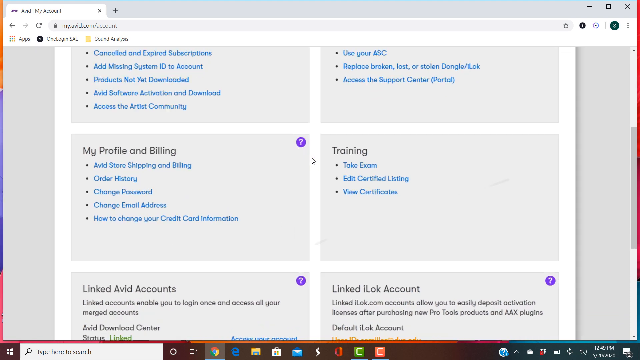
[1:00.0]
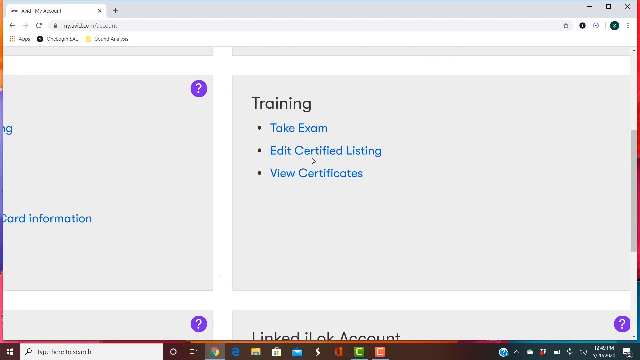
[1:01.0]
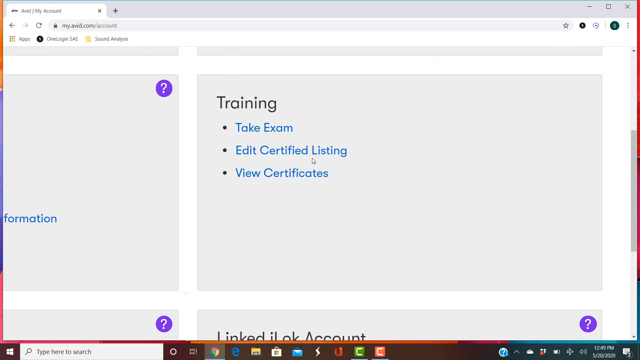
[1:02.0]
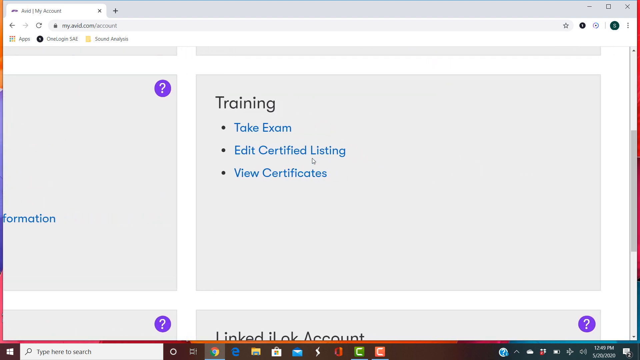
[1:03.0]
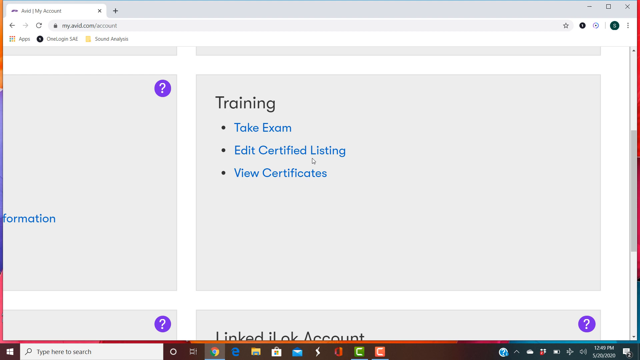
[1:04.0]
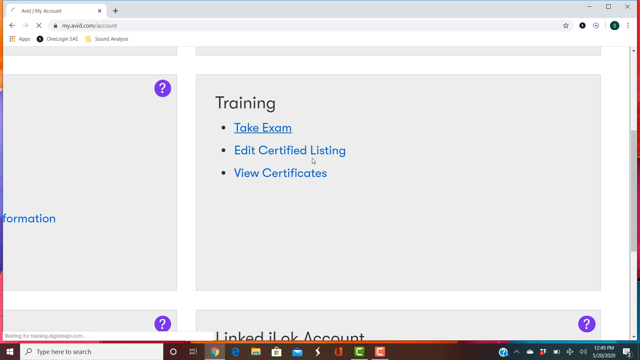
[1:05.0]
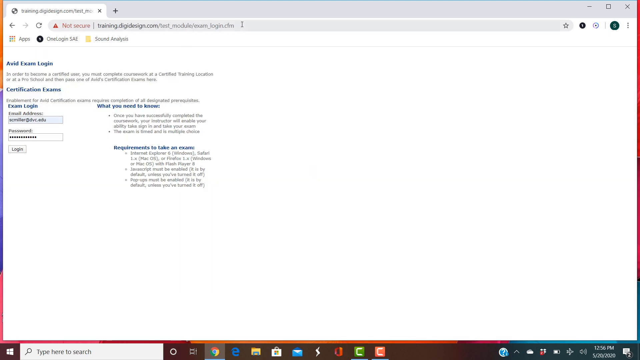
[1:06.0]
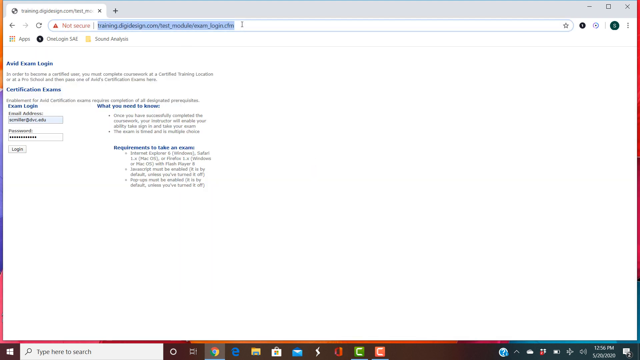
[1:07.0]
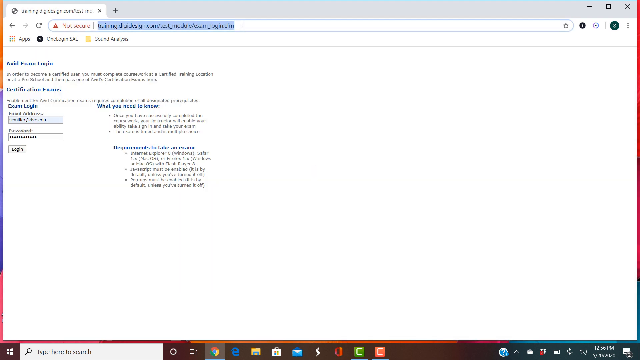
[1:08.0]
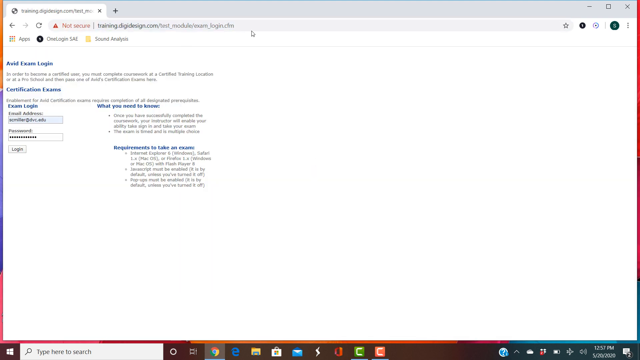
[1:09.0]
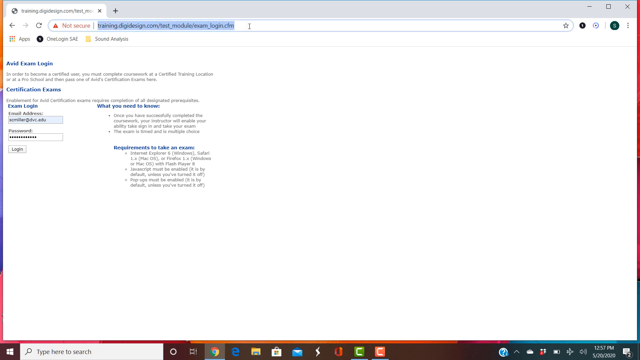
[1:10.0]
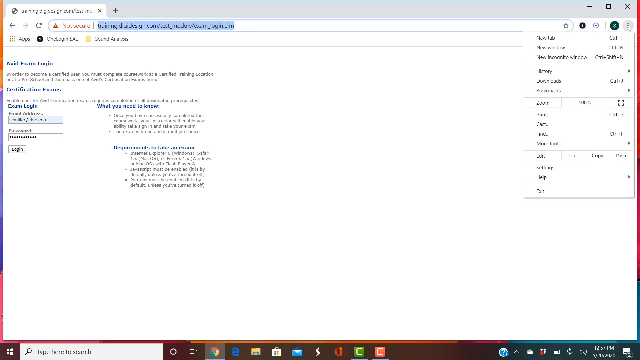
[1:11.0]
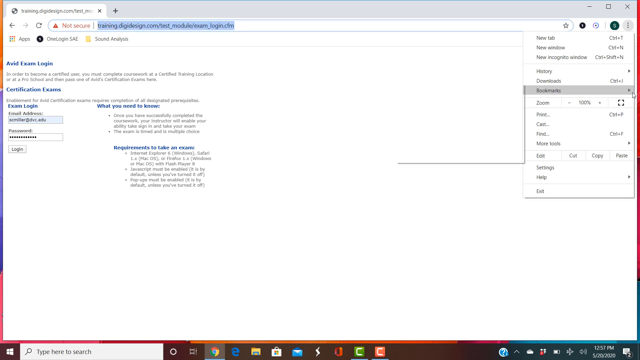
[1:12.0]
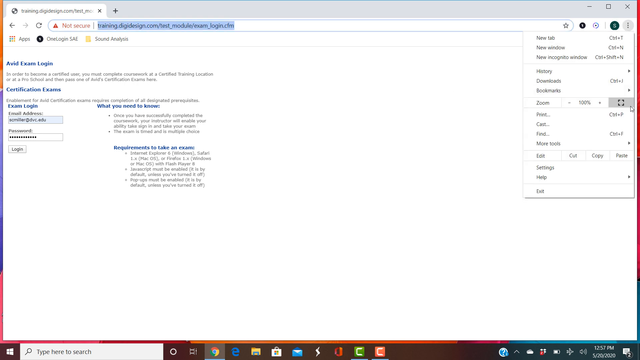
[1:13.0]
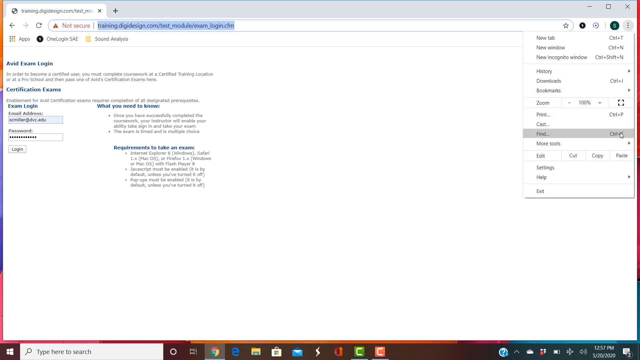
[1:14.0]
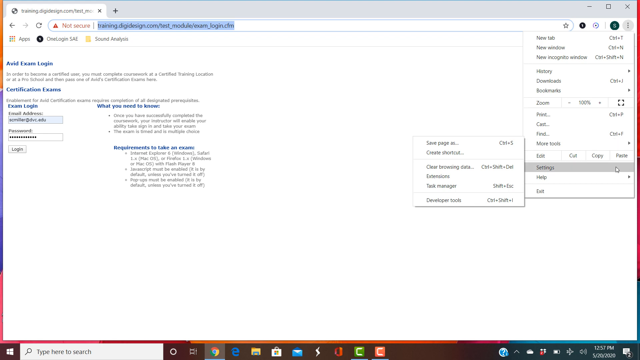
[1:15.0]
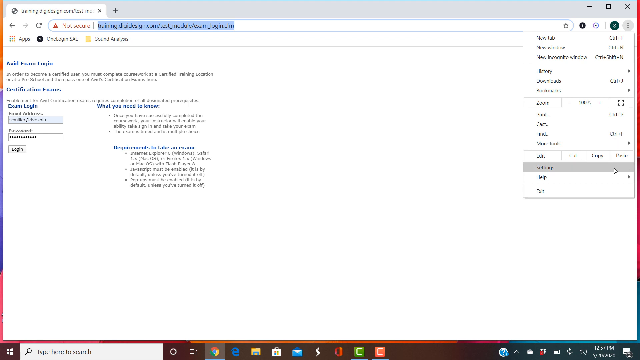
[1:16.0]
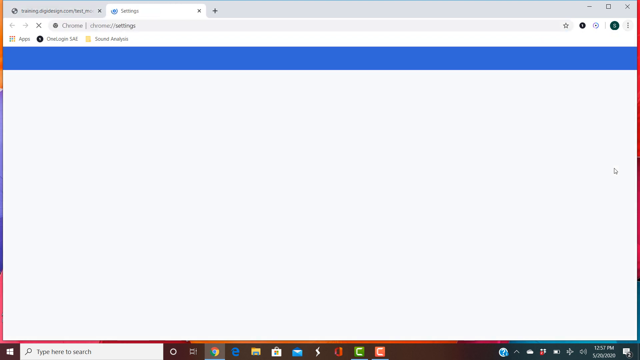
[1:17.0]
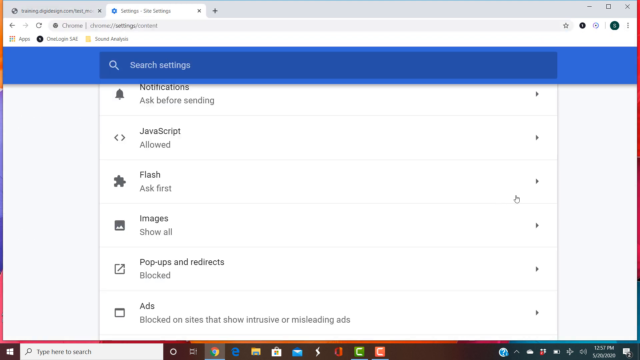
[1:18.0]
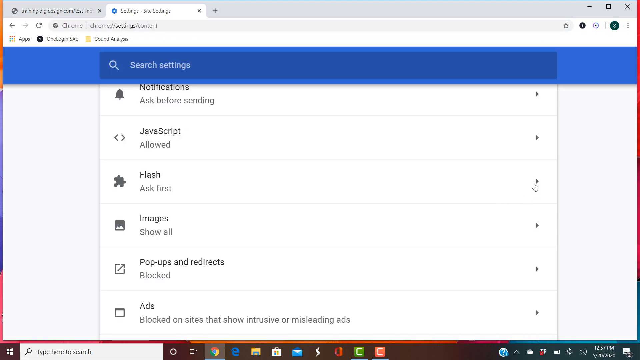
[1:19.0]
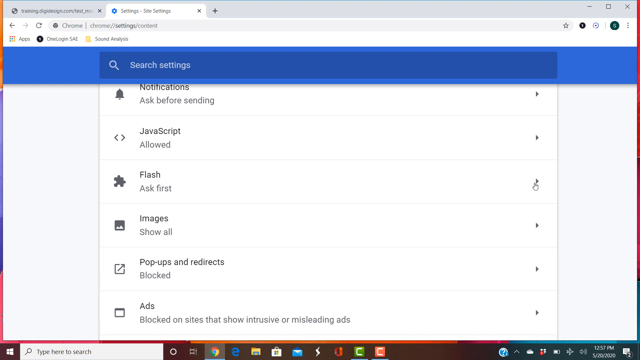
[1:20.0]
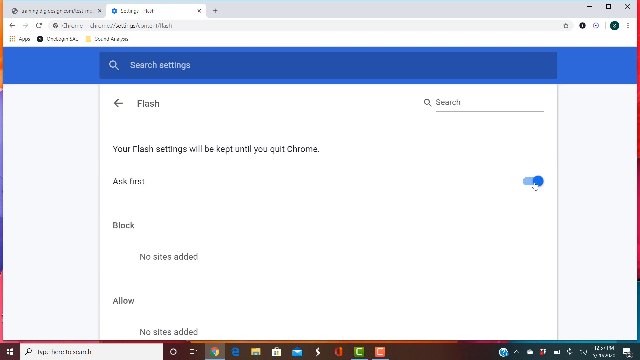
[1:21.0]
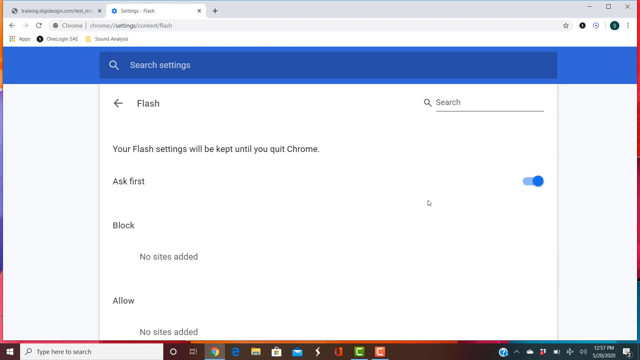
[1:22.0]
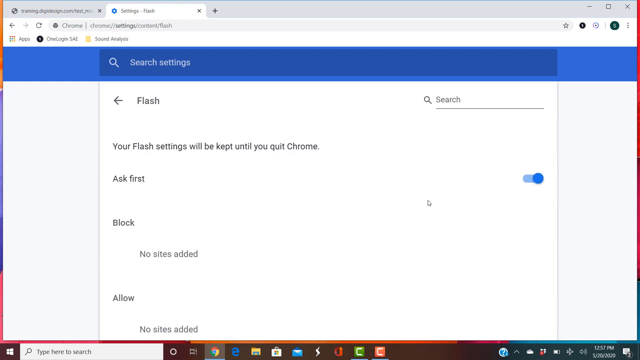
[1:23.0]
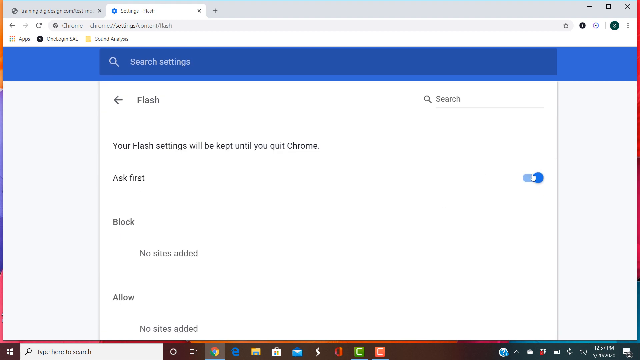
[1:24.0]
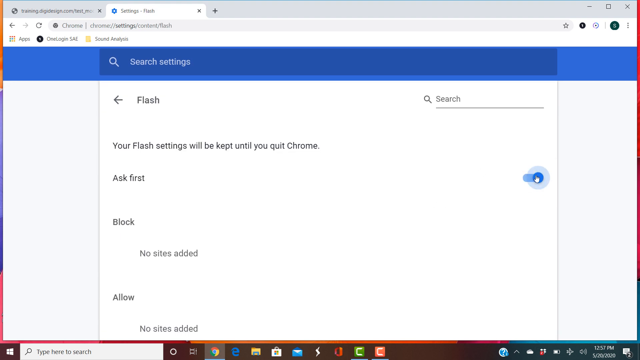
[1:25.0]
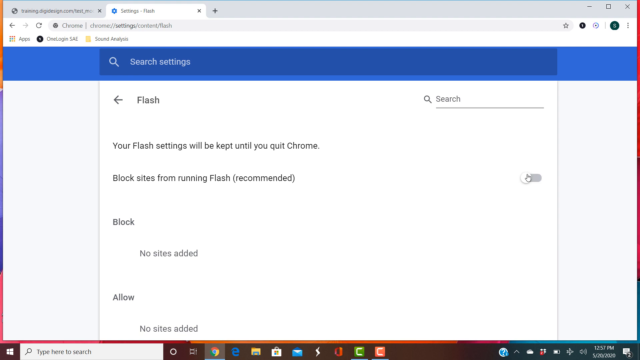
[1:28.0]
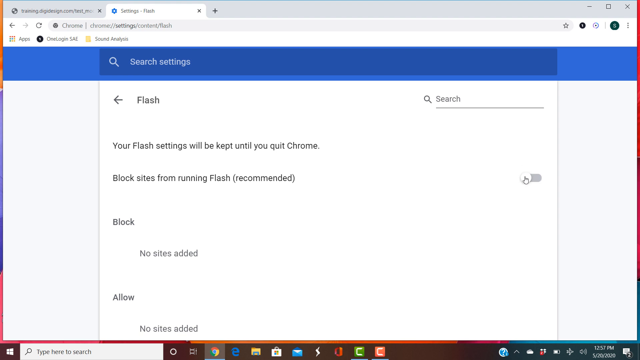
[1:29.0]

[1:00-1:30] A web page is accessed on what is seemingly a Windows computer. Its contents are different folders or sections; one is a training section that reads "take exam", "edit certificate" and "review certificate". The cursor clicks on the page, which loads another website that is flagged with a warning and a red button. The website address next to the warning is copied. The web browser's settings are then opened, and the mouse clicks on flash, where an "ask first" option is shown; the user switches off the ask first option.